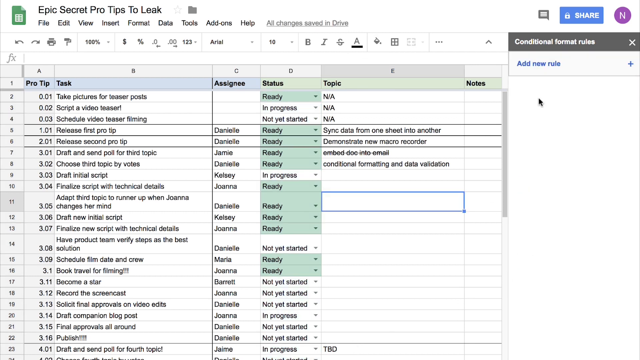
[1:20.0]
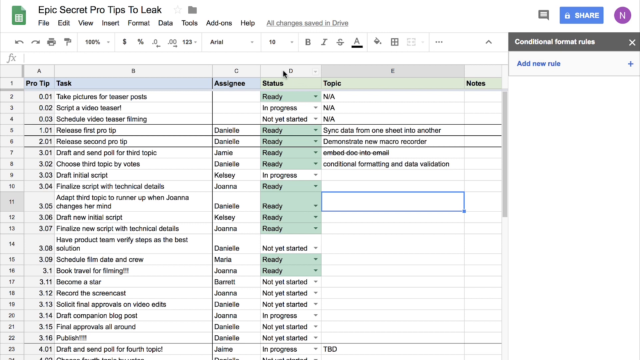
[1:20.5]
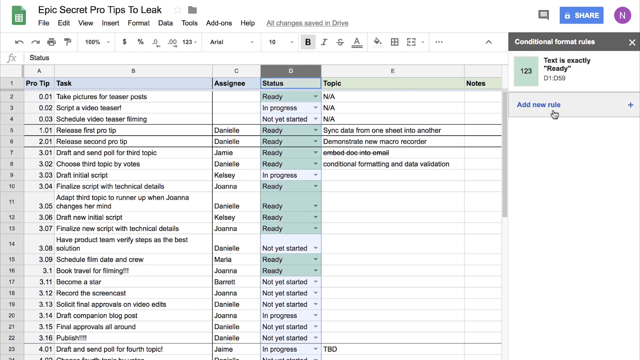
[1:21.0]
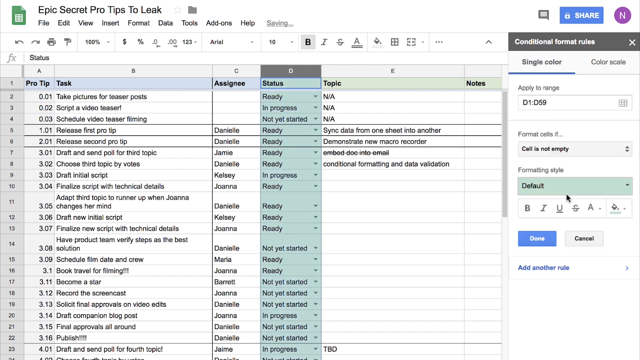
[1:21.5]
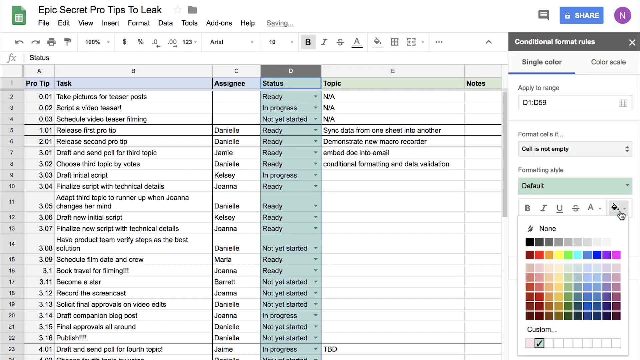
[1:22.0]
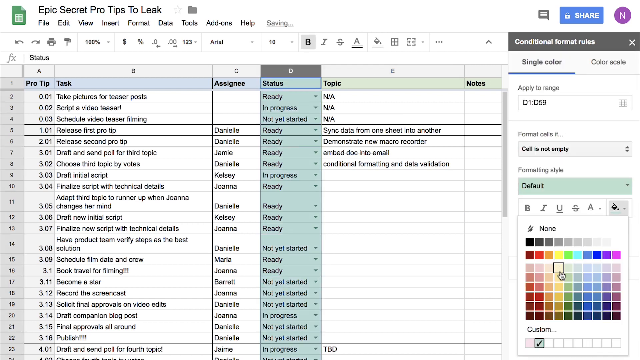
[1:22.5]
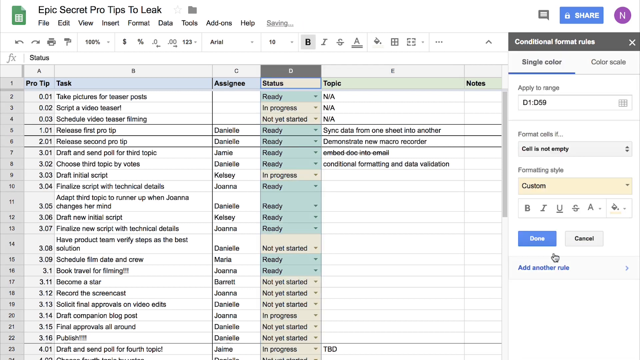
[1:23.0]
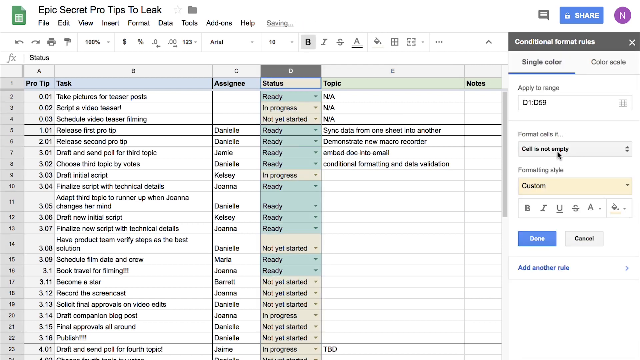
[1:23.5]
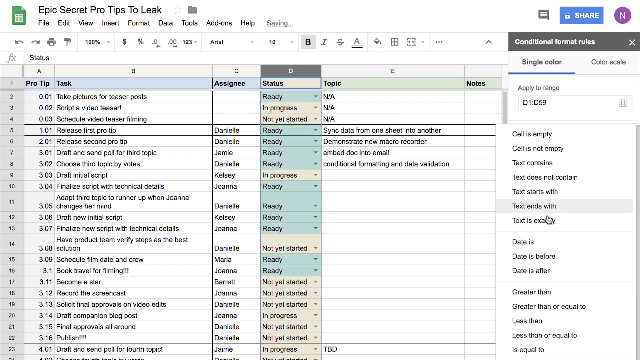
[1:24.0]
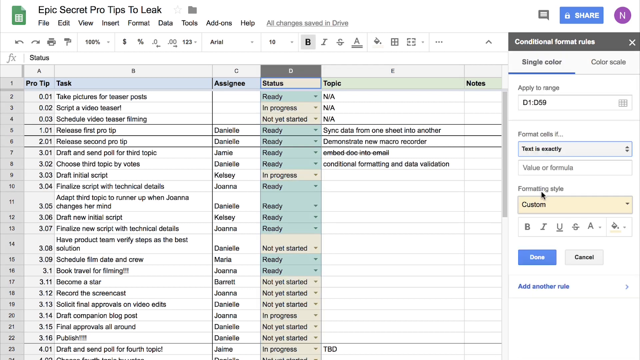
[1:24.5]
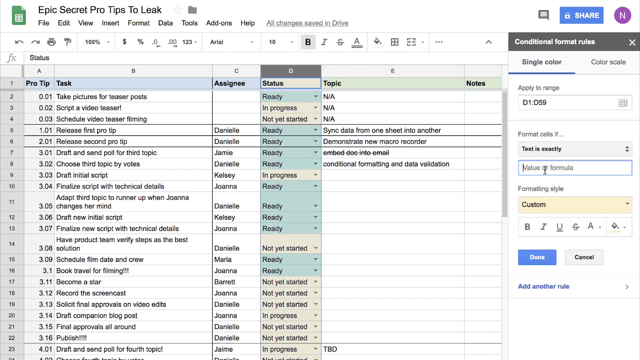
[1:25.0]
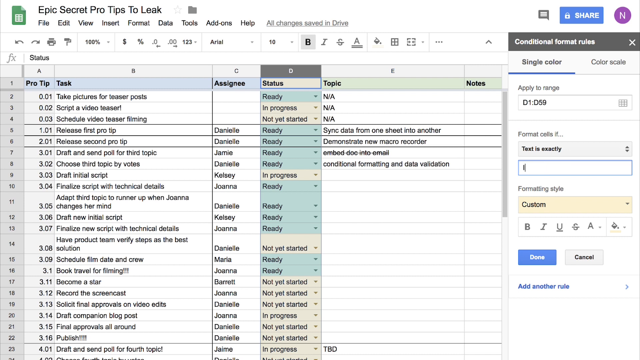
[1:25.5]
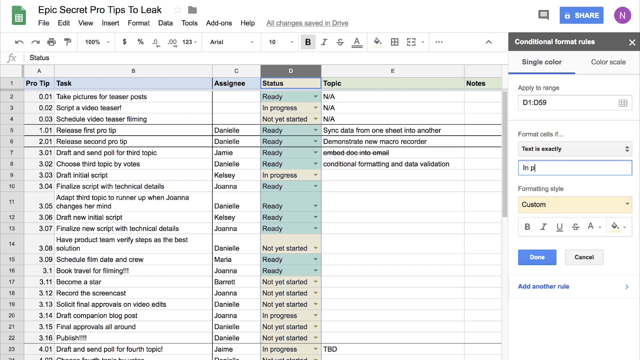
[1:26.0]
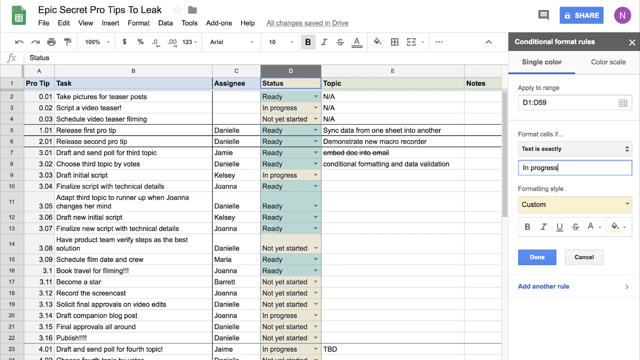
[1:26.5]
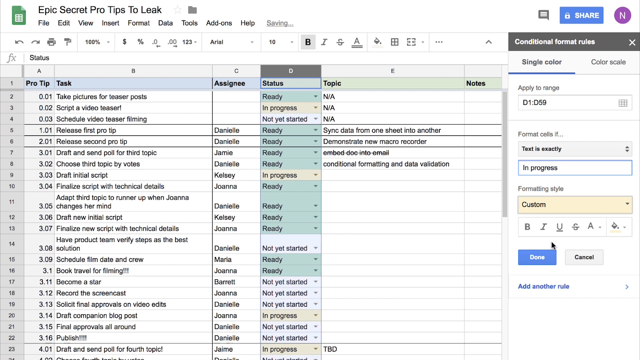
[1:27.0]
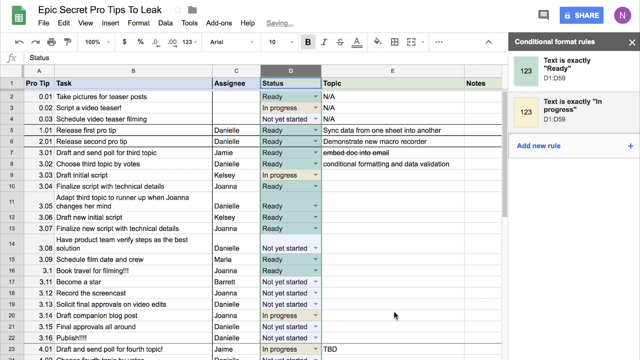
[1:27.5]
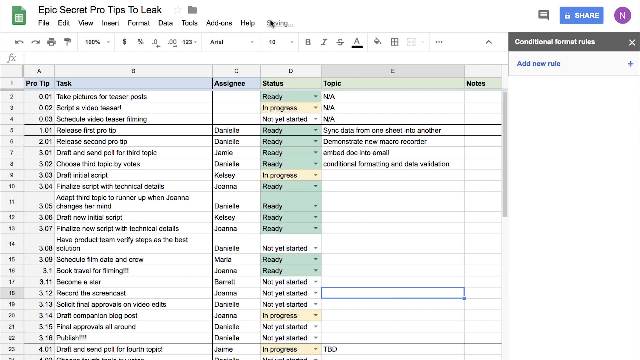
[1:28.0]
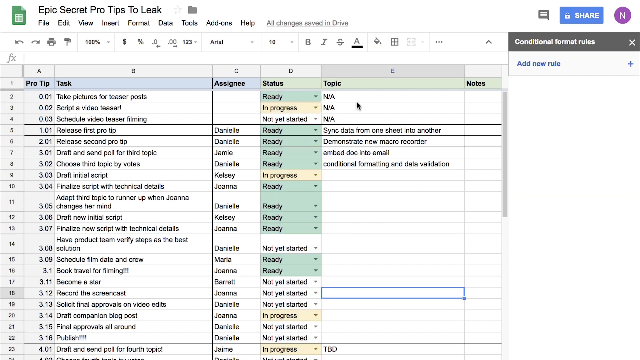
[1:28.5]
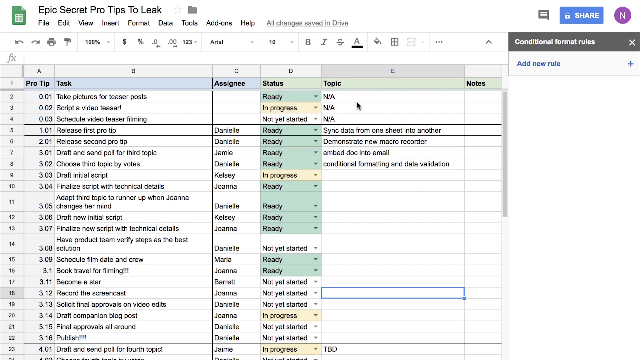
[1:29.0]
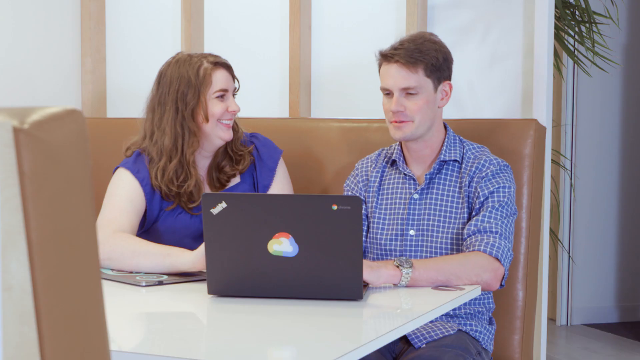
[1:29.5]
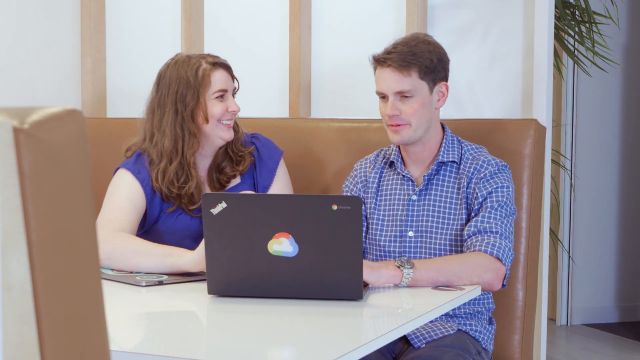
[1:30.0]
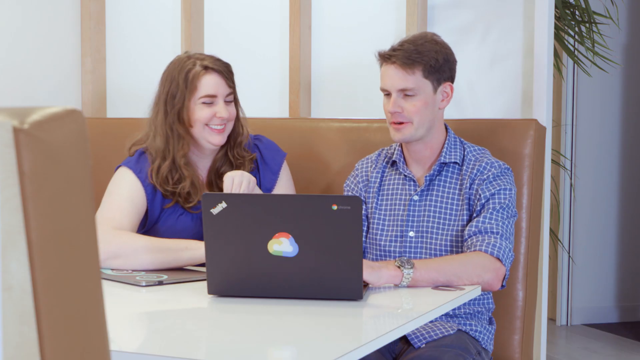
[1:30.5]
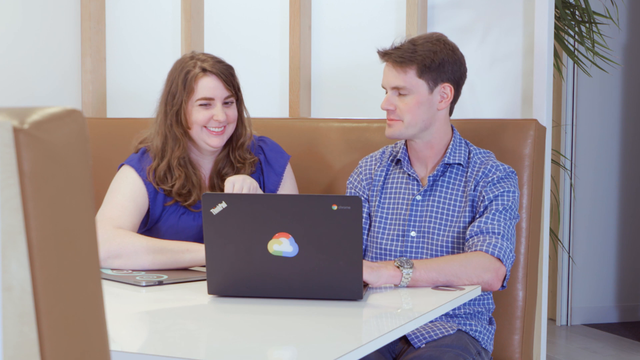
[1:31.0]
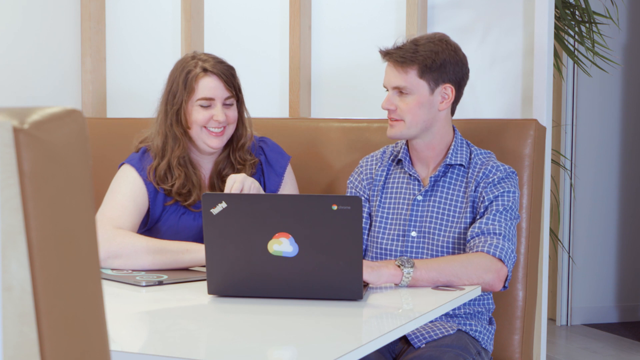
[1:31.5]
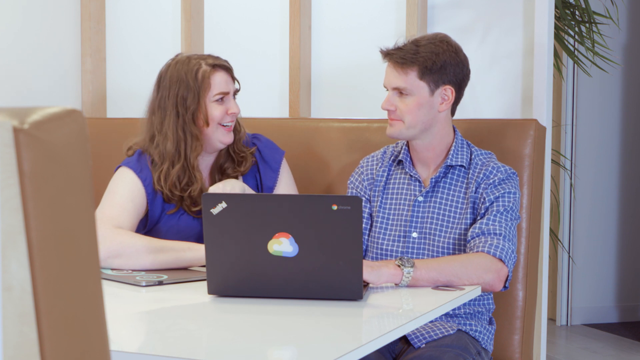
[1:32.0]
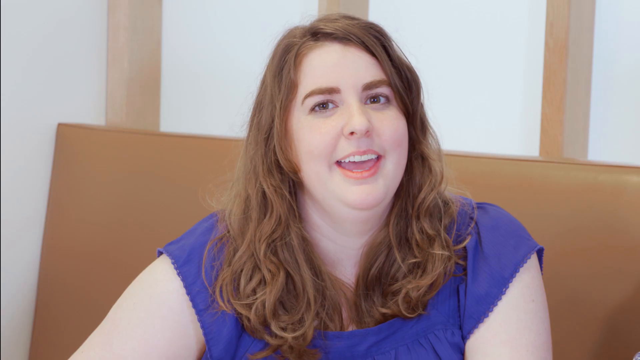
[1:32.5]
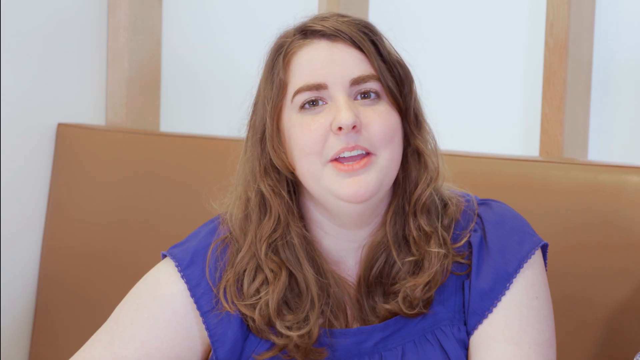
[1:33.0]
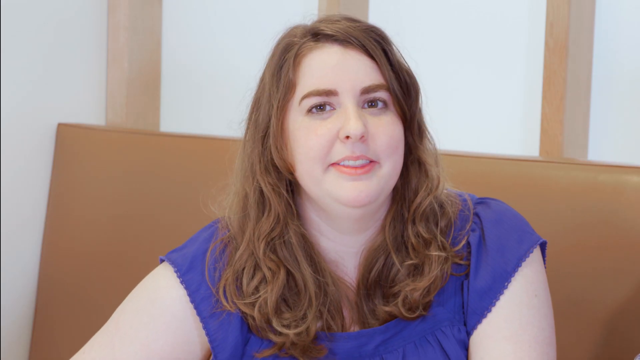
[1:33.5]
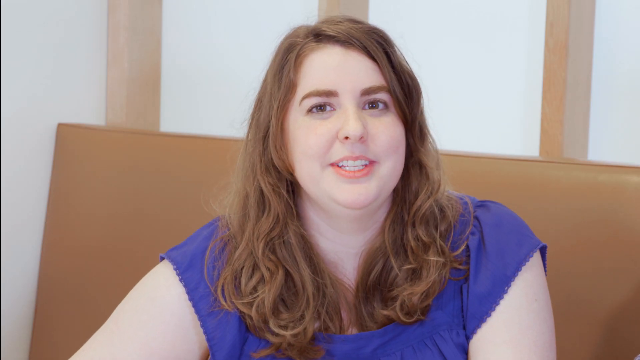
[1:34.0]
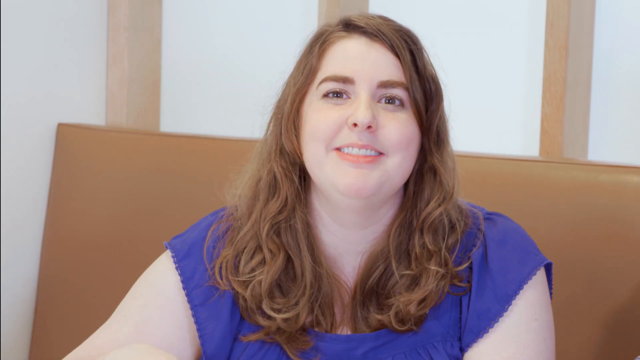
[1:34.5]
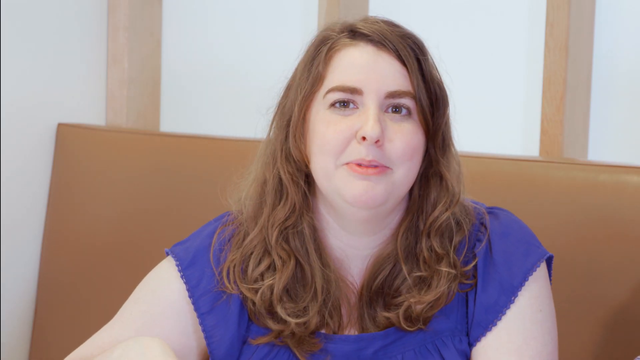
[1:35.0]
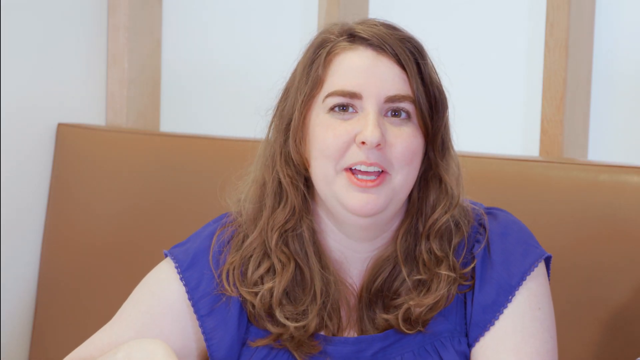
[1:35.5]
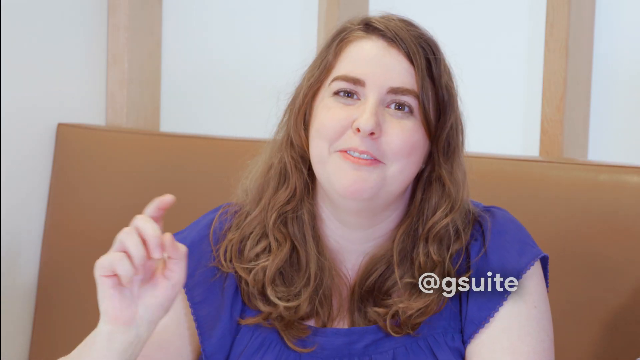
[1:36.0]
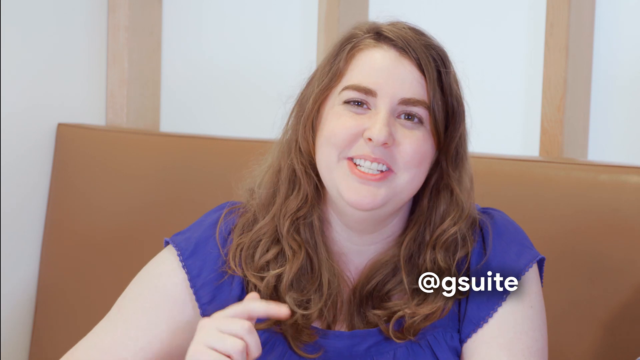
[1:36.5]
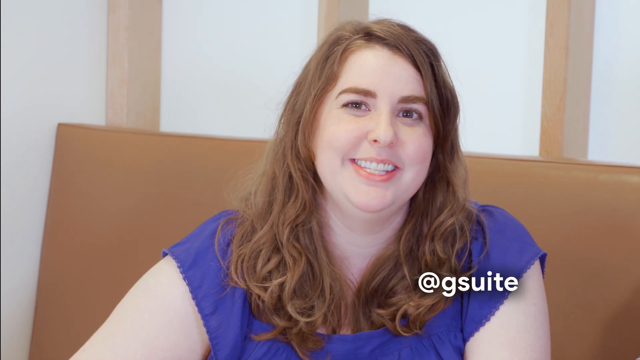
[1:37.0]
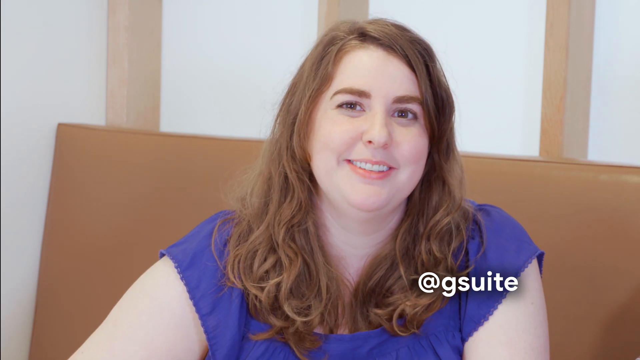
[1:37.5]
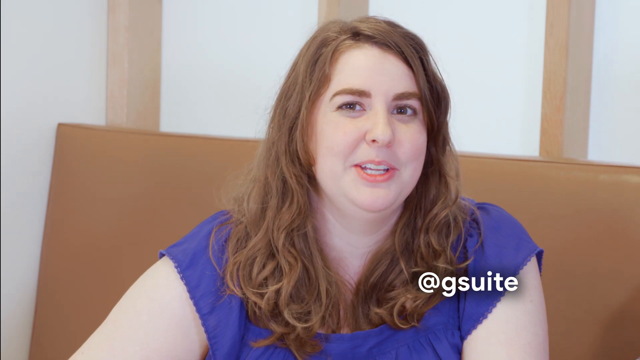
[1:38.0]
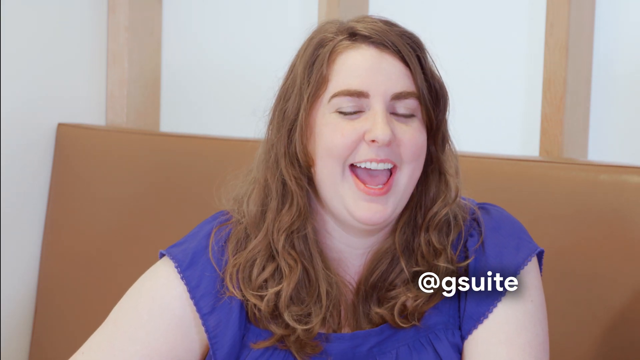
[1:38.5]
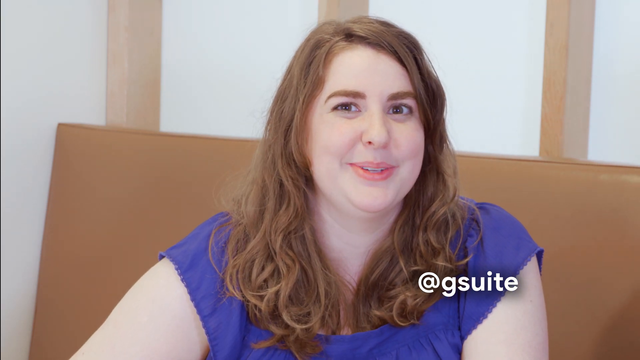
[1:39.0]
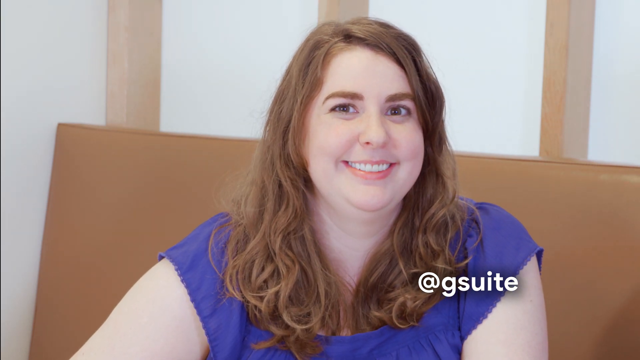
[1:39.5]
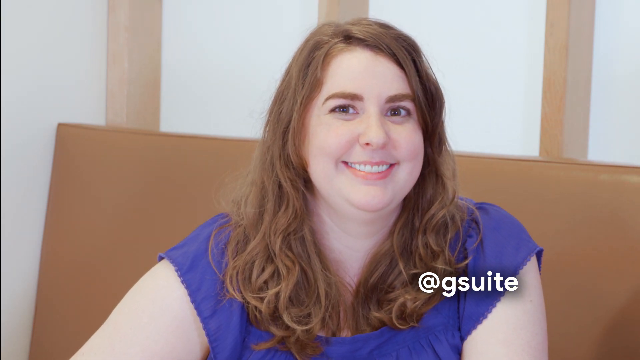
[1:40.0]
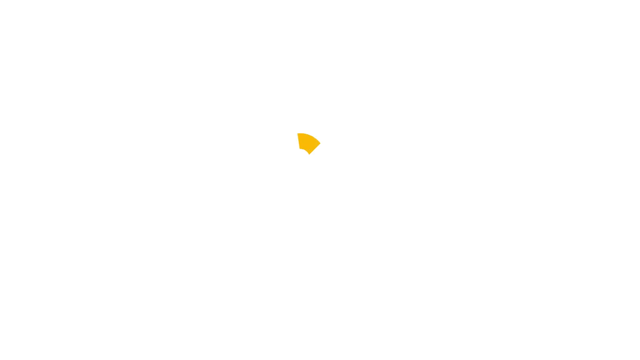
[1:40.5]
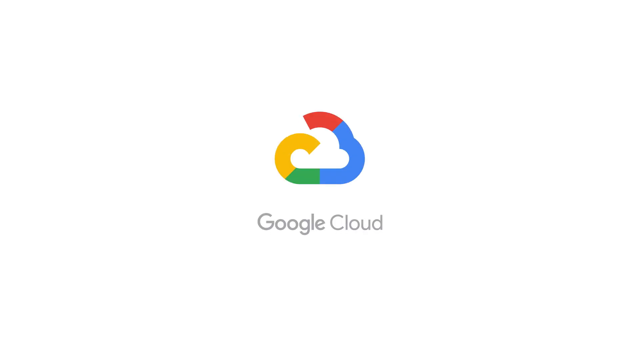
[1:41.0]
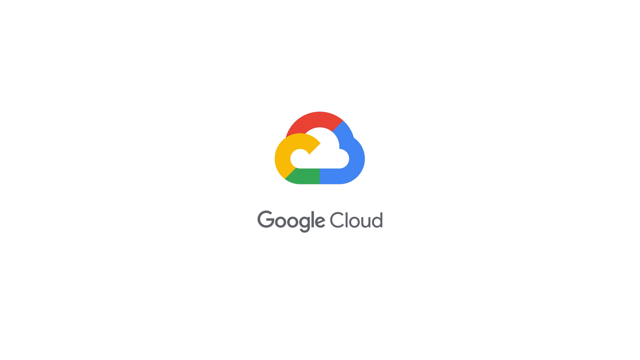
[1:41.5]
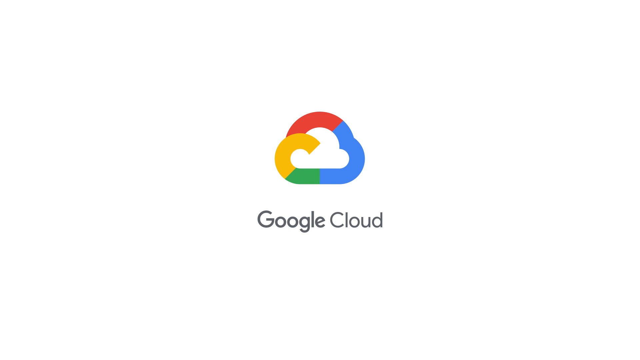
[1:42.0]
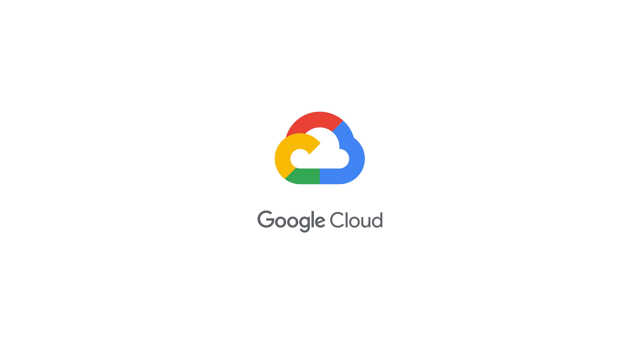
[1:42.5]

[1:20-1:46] The laptop screen still shows many items under Pro Tip task. Highlighted squares, apparently more than 100, appear on the screen, and some of the items are highlighted in green and orange columns. Johanna and the other guy talk, and Johanna, smiling, starts explaining and illustrating how things are summarized and done. At the end of the video, a logo of G Suite and Google Sheets appears.